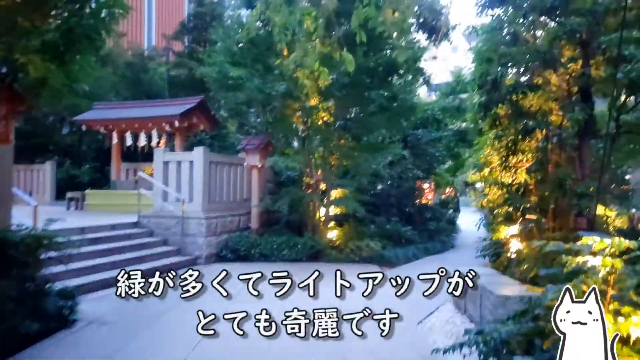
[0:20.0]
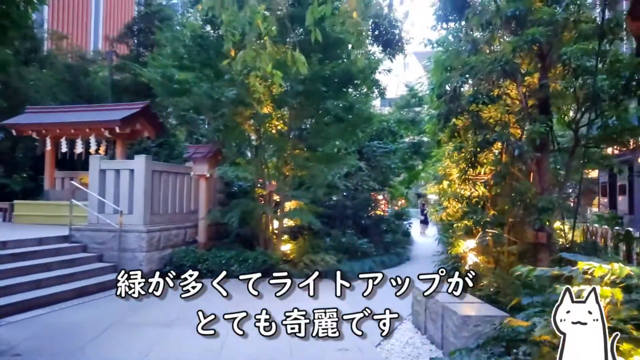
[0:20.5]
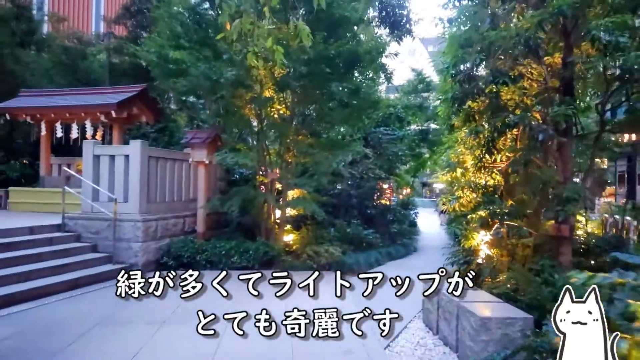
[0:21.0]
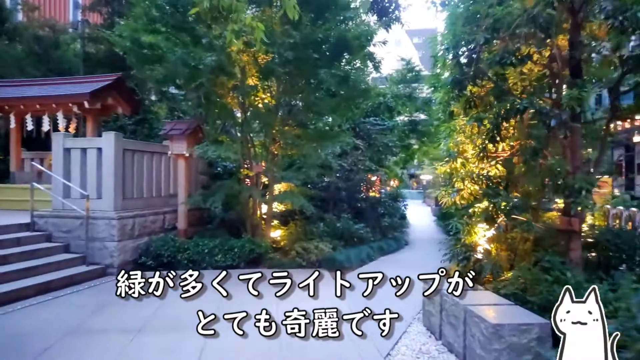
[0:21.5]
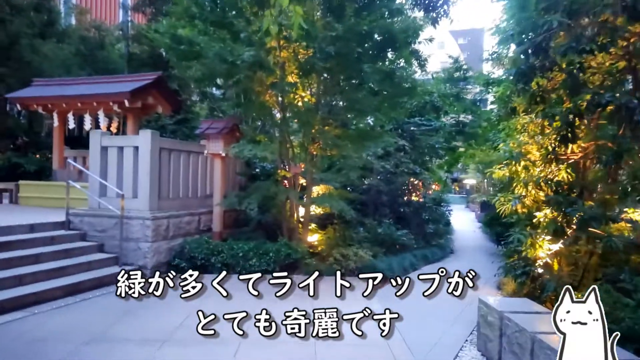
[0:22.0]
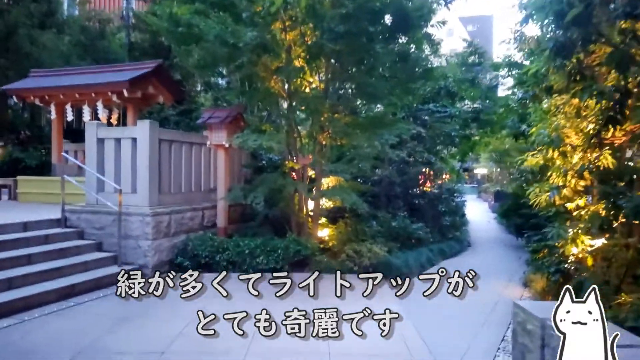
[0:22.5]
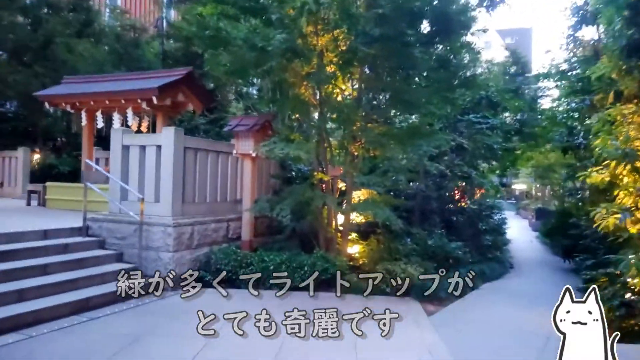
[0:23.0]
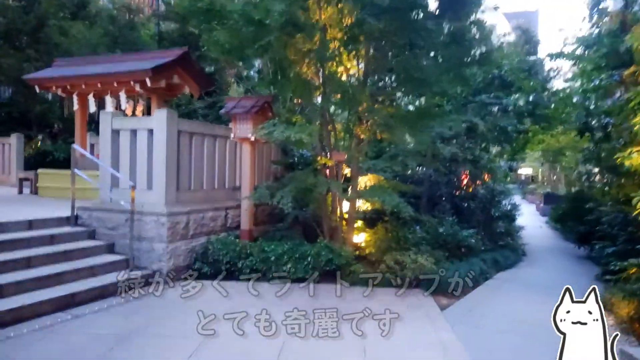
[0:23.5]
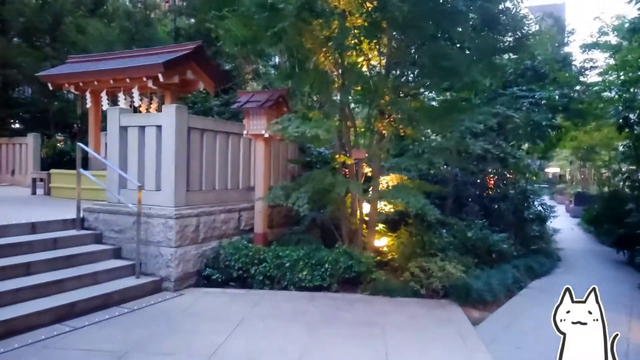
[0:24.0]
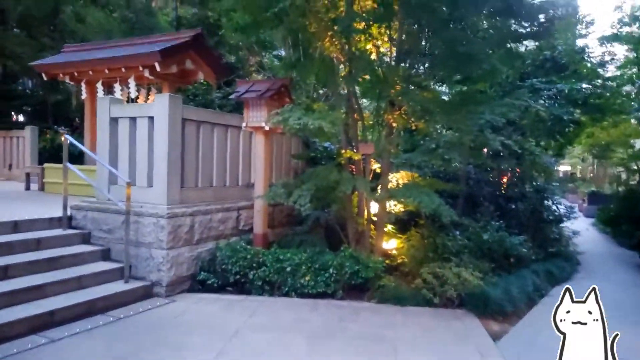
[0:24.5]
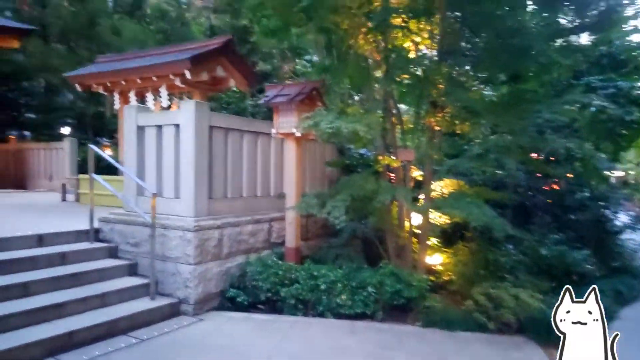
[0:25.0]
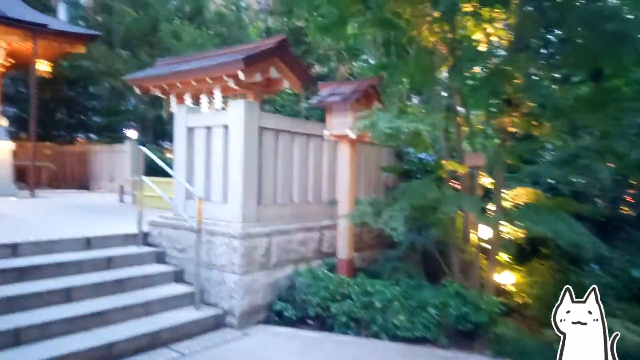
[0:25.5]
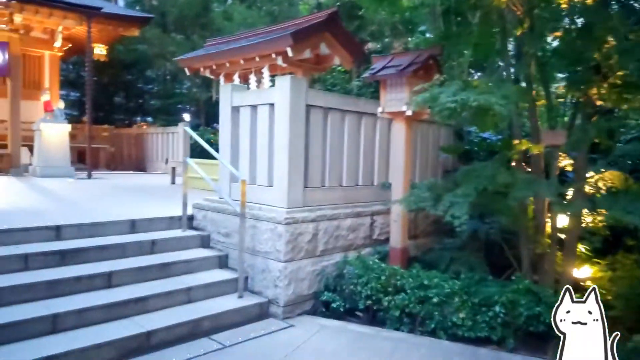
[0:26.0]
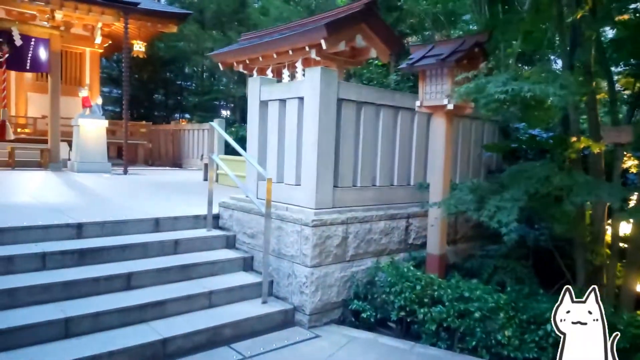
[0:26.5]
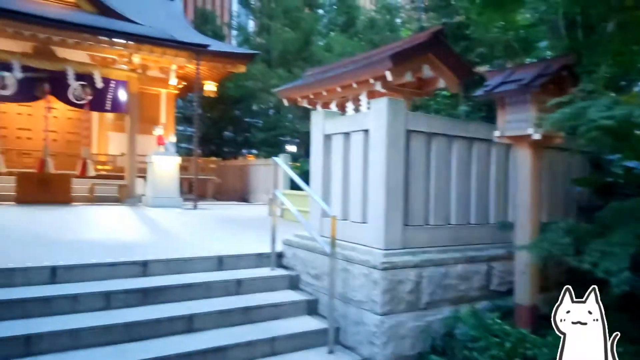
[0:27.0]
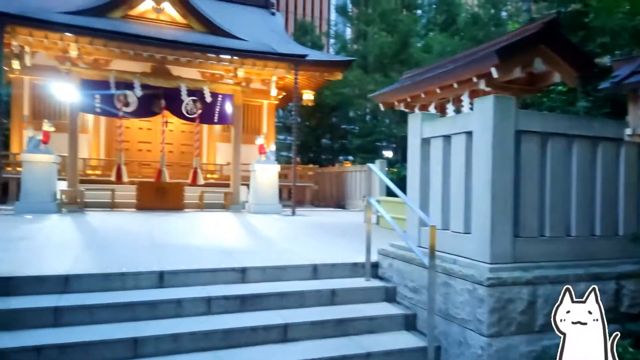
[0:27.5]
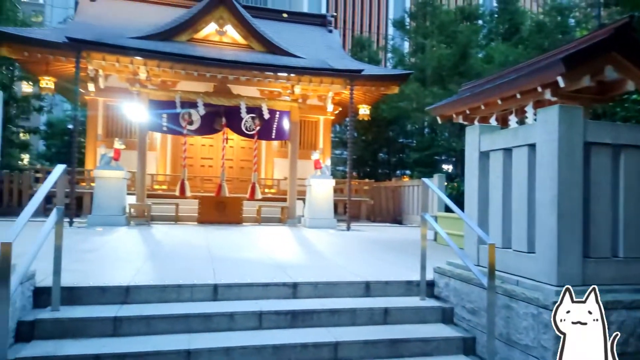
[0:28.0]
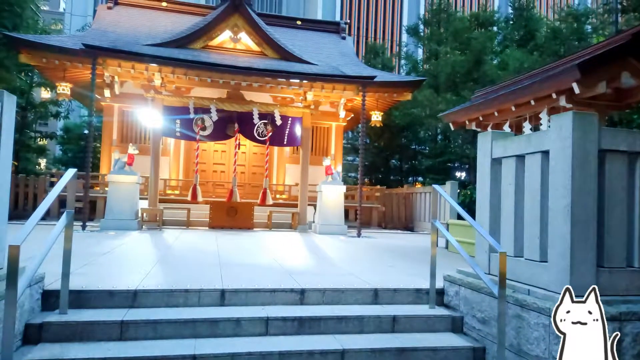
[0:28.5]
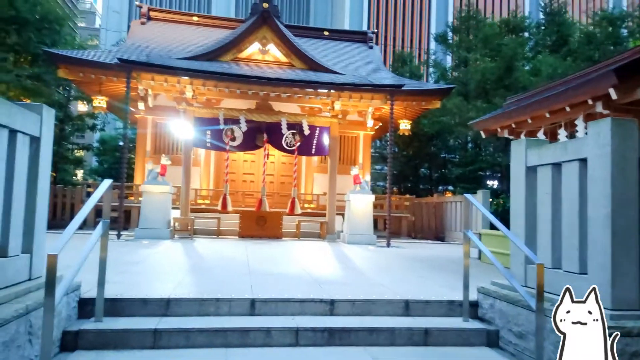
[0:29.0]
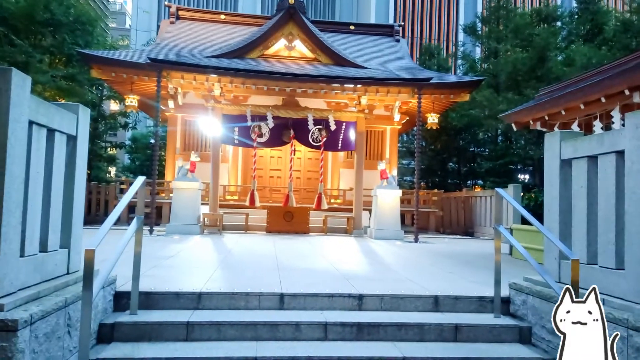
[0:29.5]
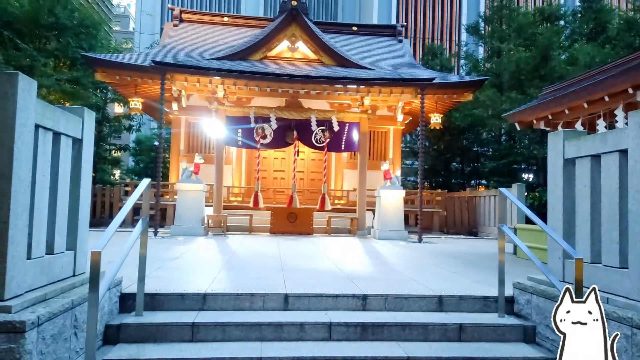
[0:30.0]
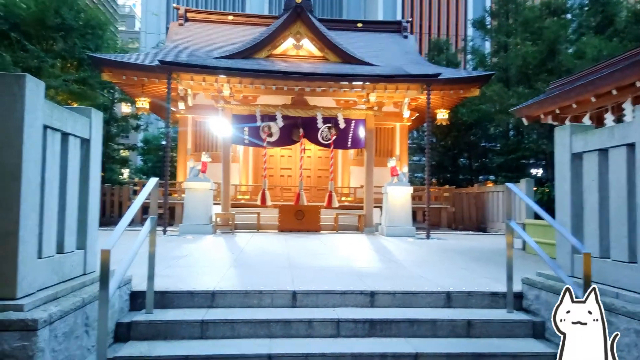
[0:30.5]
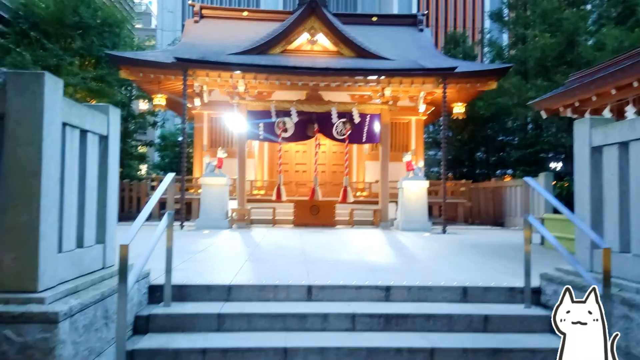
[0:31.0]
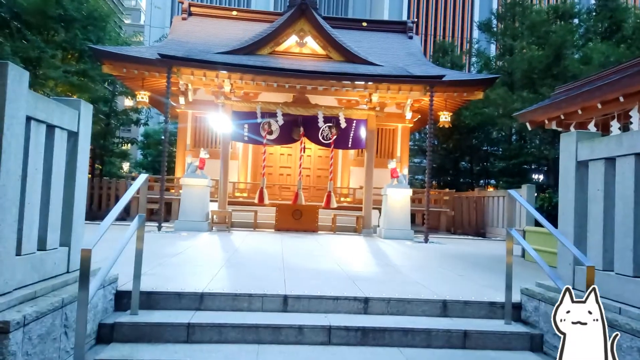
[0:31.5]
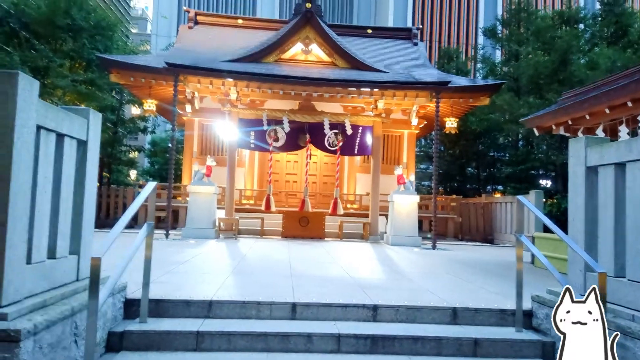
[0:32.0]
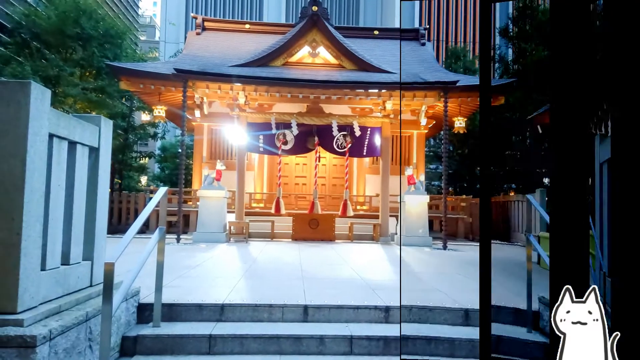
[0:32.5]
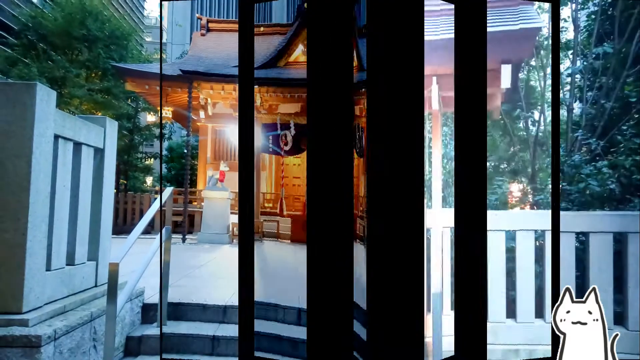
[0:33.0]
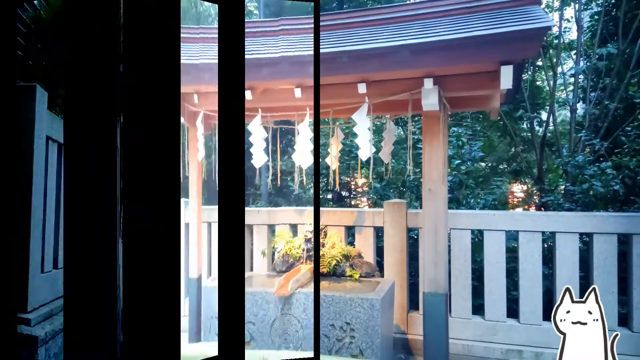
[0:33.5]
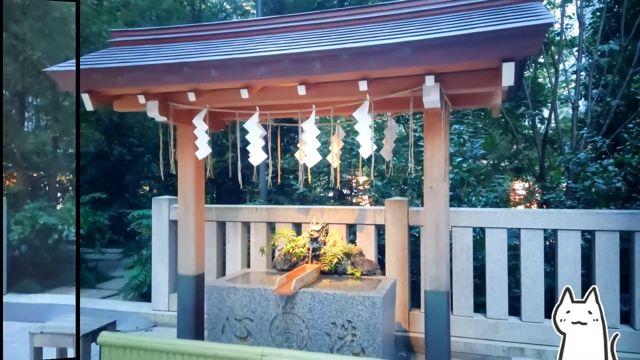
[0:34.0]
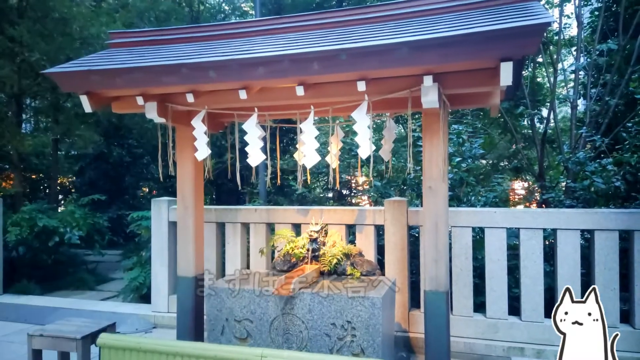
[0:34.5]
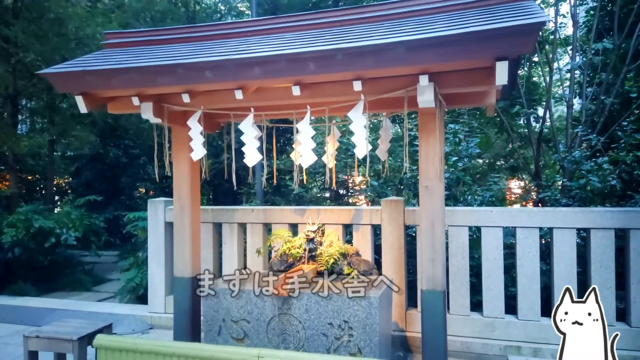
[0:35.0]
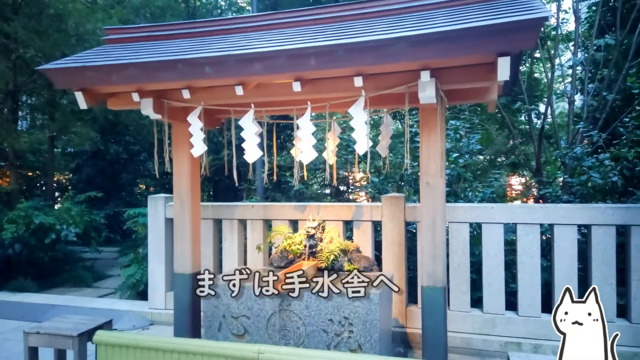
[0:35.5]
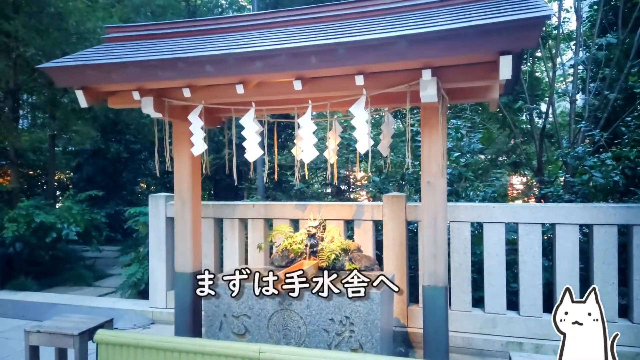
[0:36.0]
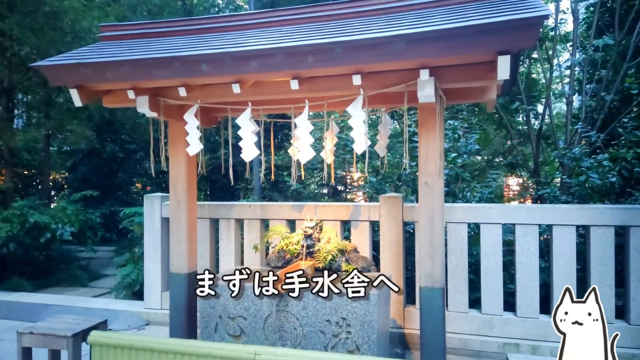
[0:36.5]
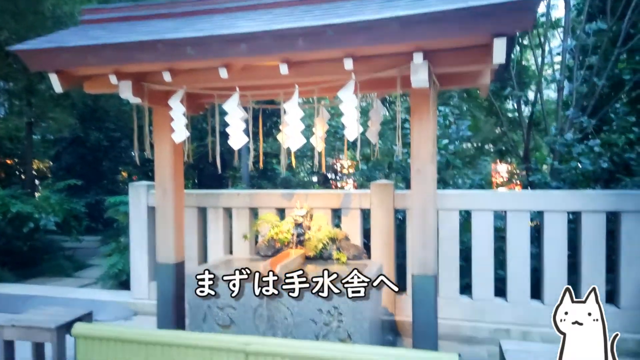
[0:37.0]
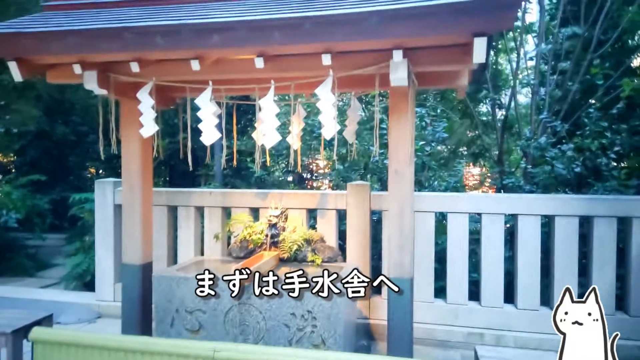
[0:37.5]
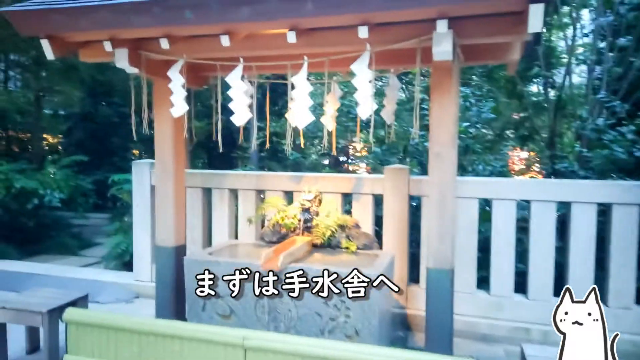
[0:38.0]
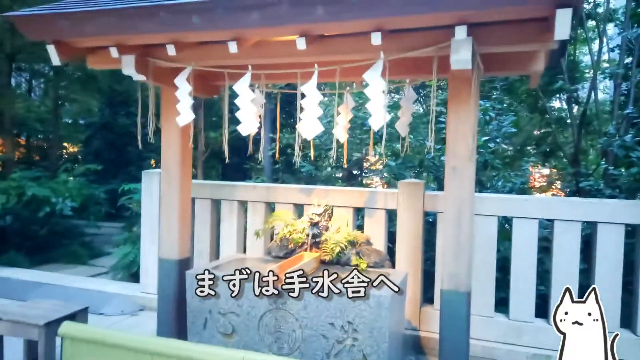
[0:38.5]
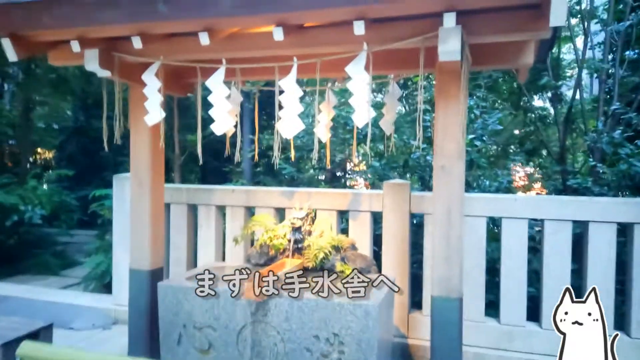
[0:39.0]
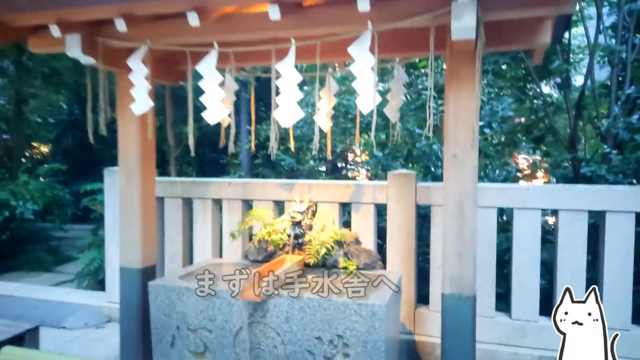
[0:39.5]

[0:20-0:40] The observer walks down a sidewalk flanked on both sides by a lot of shrubbery and trees, and walks up to an imperial Asian-like structure that looks like a gazebo. Asian-style lamps hang down from the gazebo's ceiling. There is a smaller gazebo to the right and a larger gazebo in the middle. Five steps lead up to the raised area containing the gazebo, and another set of steps leads into the gazebo. It appears to be evening. Lamps are lit within the shrubbery to light up the area, and the gazebo is lit with Asian lanterns as well as outside lamps or electrical lighting features. The smaller gazebo to the right has a fountain, with lighting showcasing it. Two pedestal structures in front of the gazebo hold statues of a fox-like animal, one on the left and another on the right.